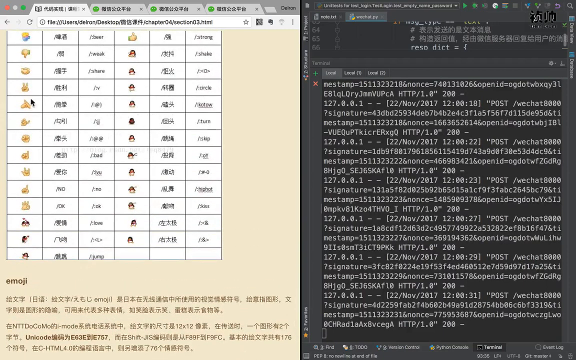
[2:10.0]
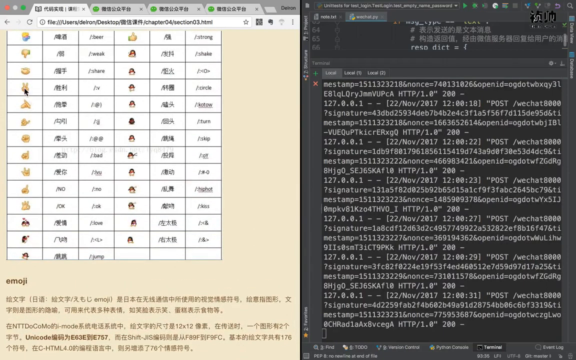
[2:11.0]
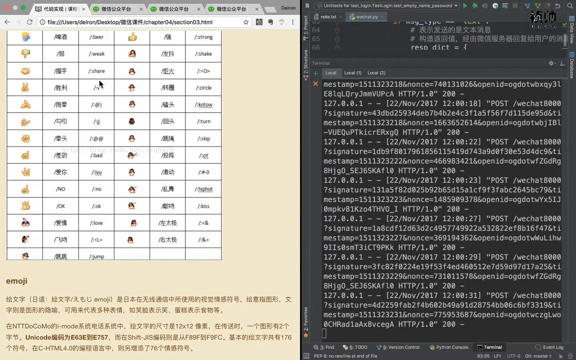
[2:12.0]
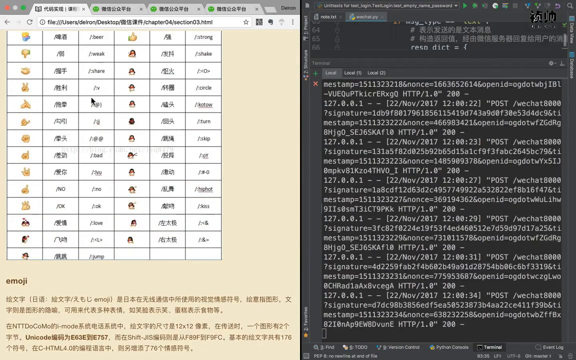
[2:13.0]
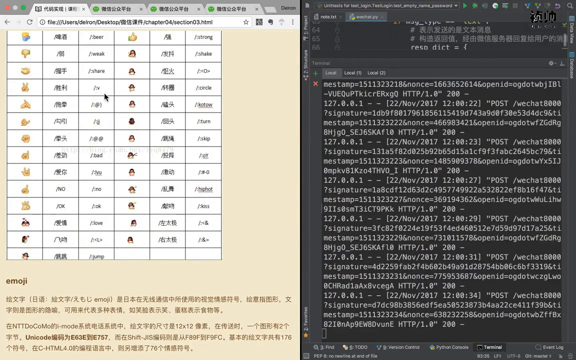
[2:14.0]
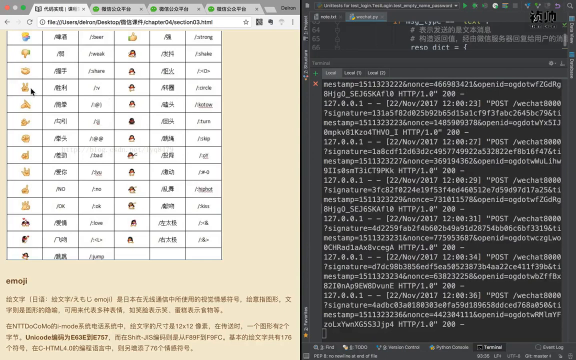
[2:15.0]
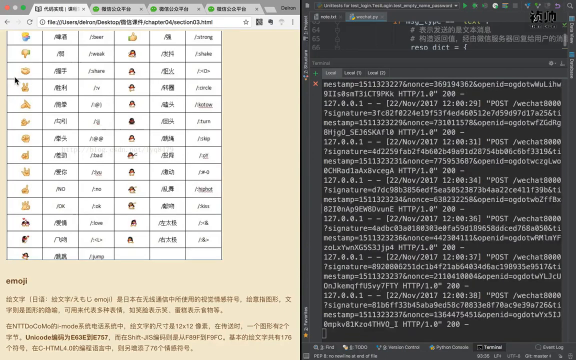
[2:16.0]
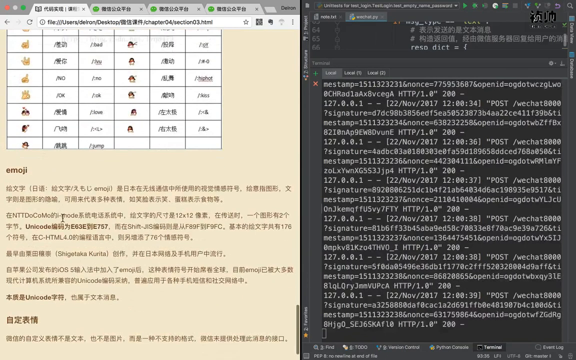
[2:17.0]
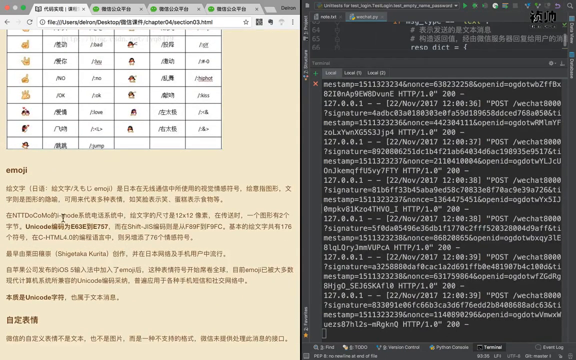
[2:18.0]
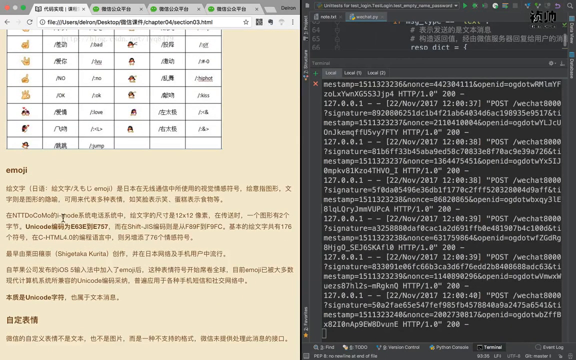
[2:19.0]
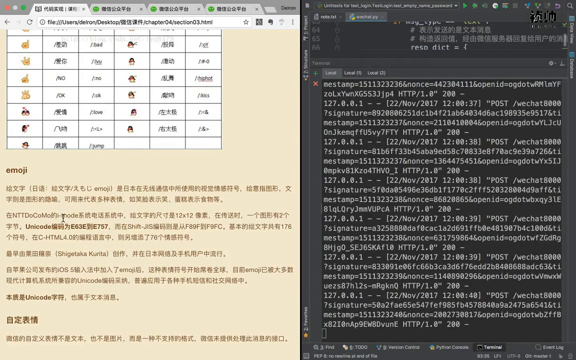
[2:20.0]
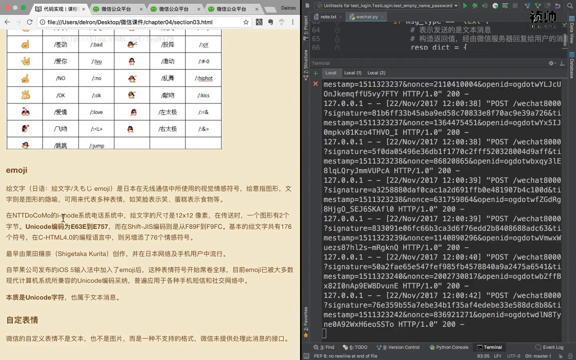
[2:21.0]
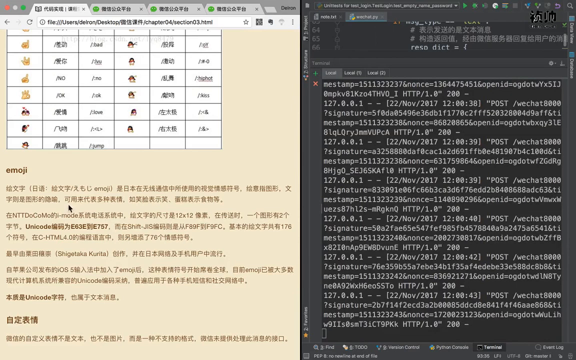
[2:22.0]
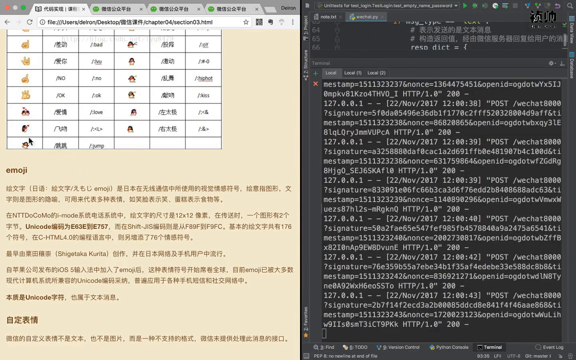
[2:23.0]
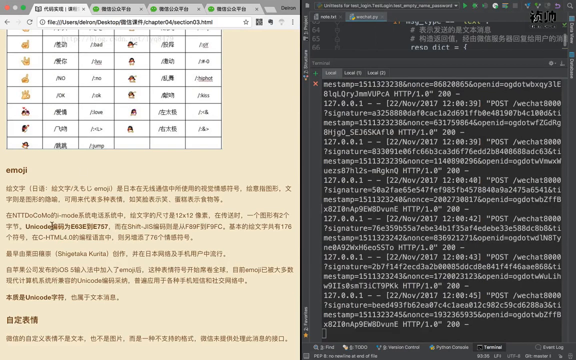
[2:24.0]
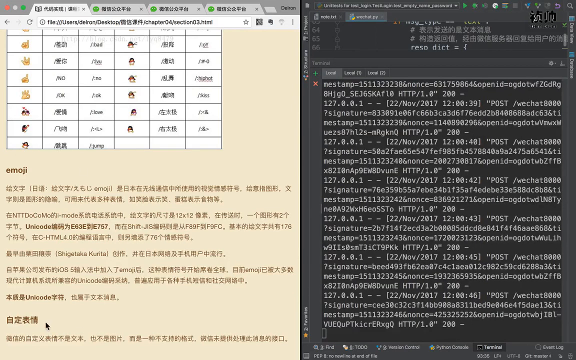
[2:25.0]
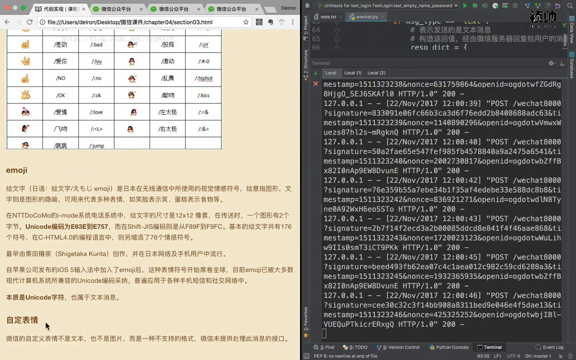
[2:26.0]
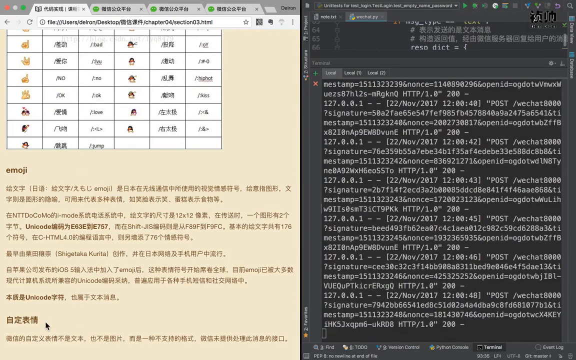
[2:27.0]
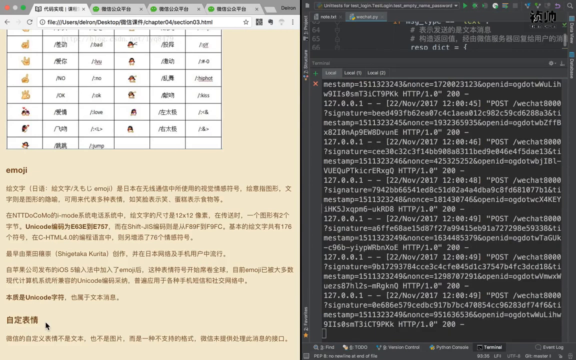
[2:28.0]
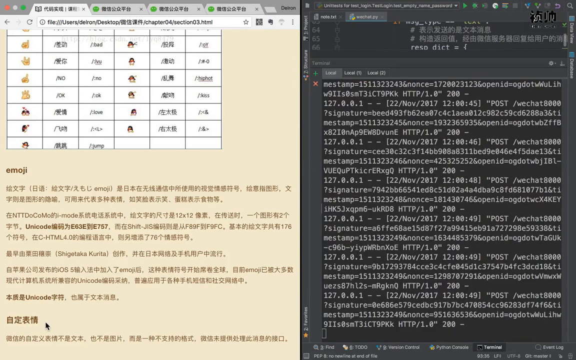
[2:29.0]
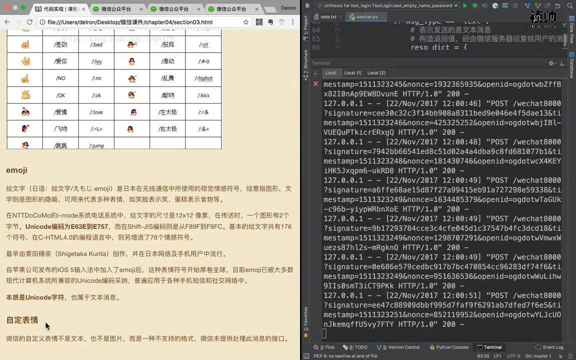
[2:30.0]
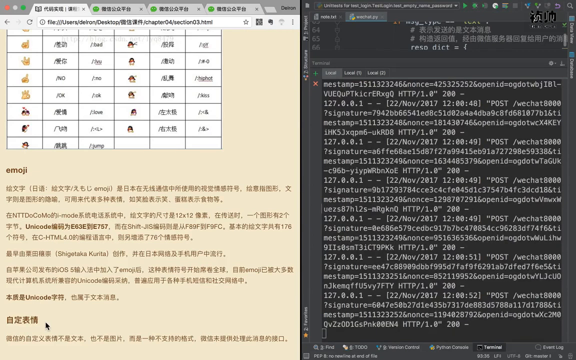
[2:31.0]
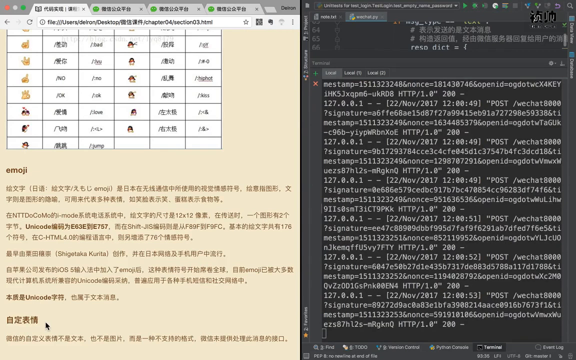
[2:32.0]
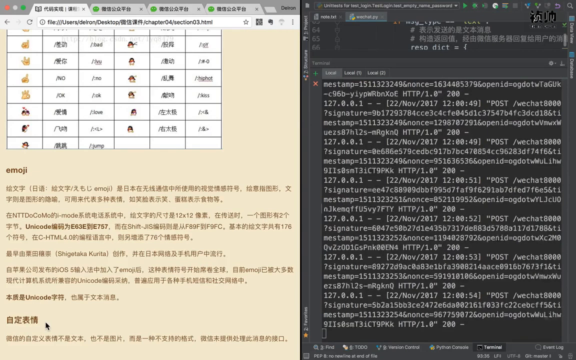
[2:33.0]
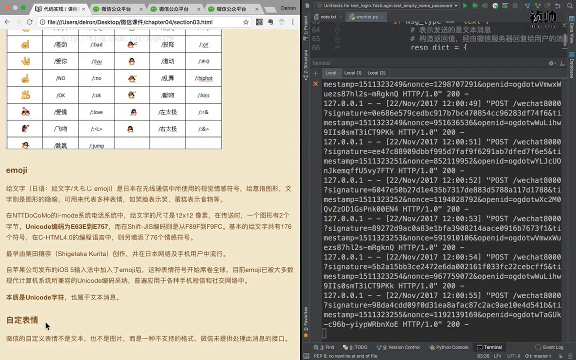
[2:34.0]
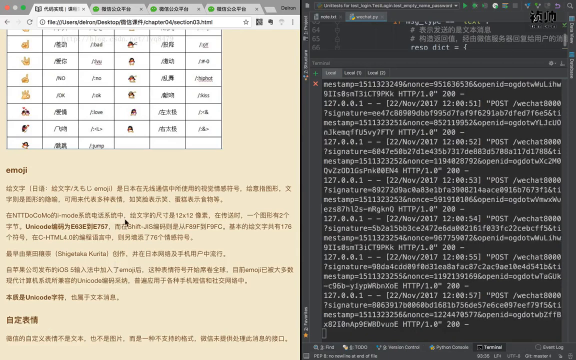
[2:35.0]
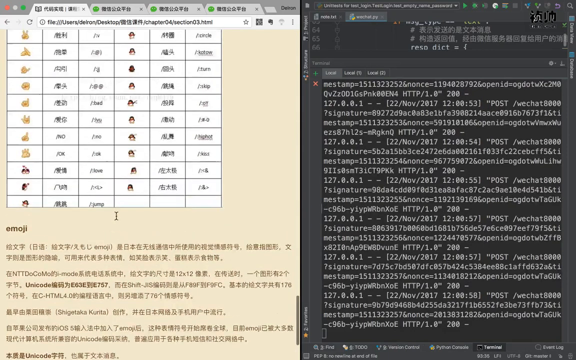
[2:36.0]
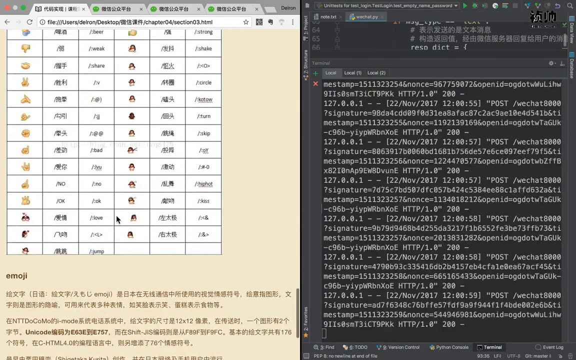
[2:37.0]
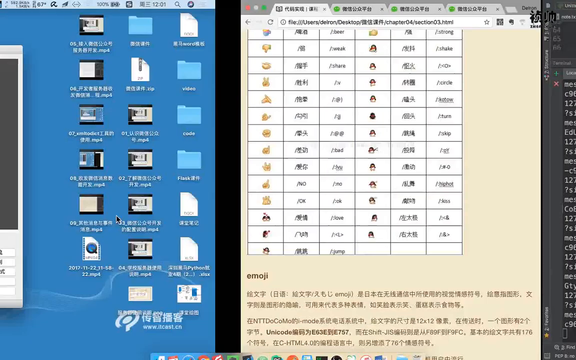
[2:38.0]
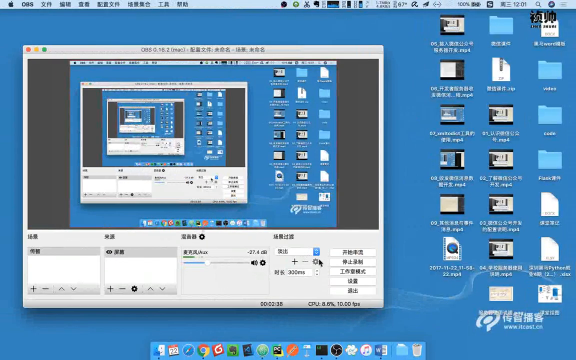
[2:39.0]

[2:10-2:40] Code continues to print out automatically on the right, while on the left side the person scrolls through, apparently reading a paragraph of information about the emojis. There is a mention of "12 by 12", possibly the dimensions or pixel size of the emoji. The whole site has a light beige color, and the text is sort of a light brown color.